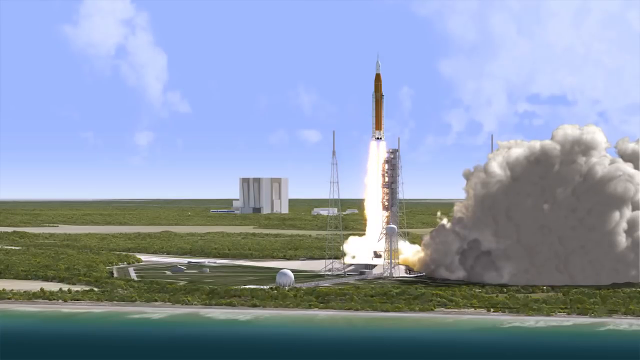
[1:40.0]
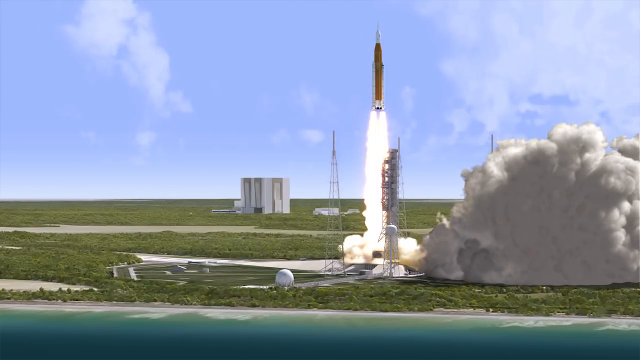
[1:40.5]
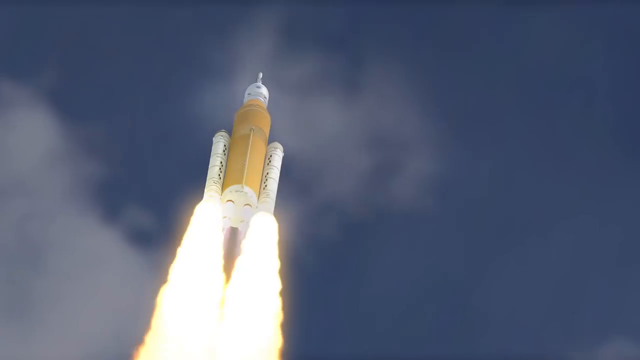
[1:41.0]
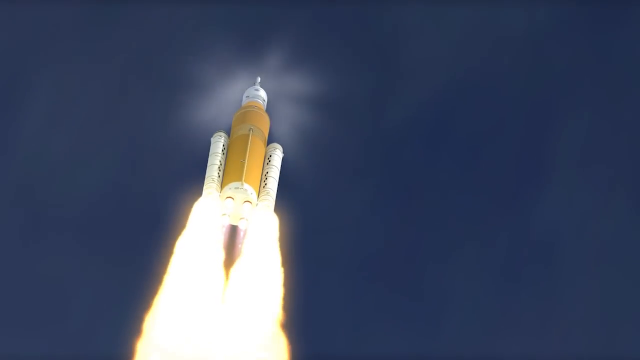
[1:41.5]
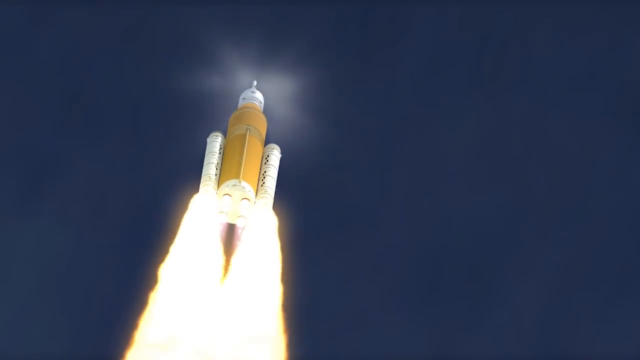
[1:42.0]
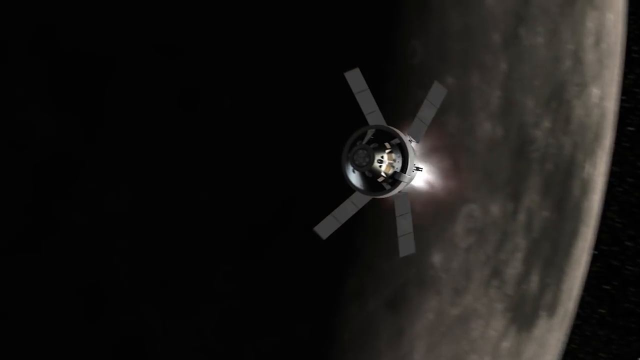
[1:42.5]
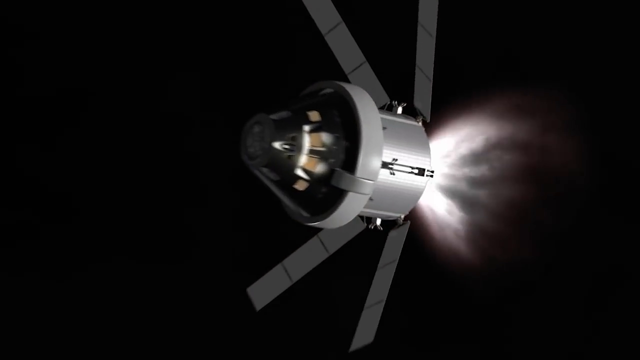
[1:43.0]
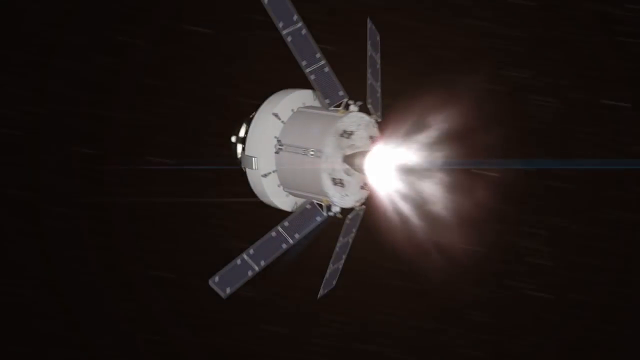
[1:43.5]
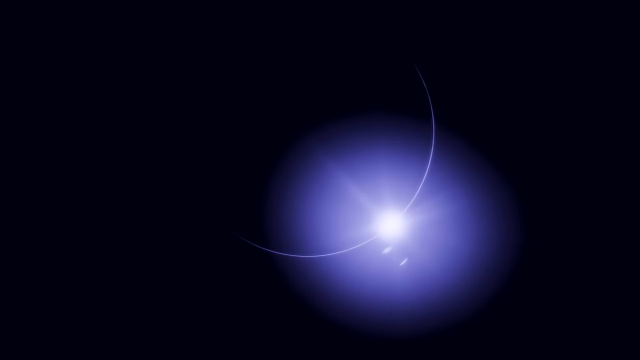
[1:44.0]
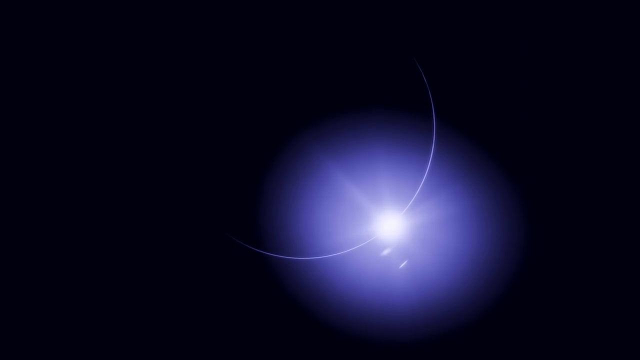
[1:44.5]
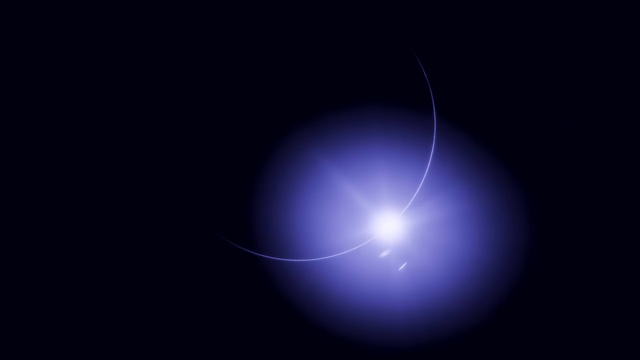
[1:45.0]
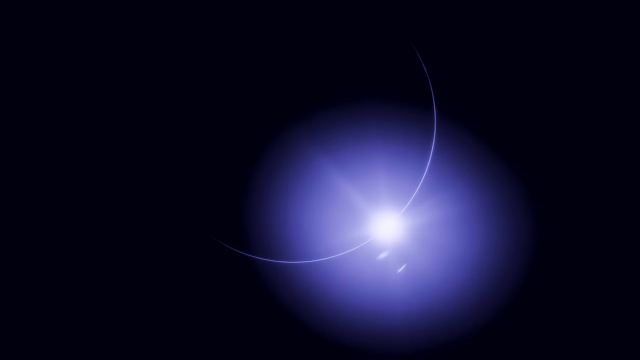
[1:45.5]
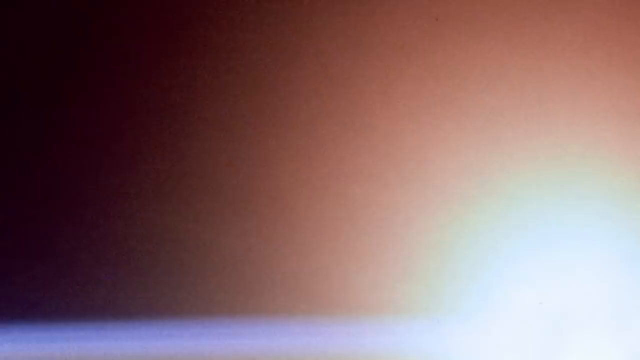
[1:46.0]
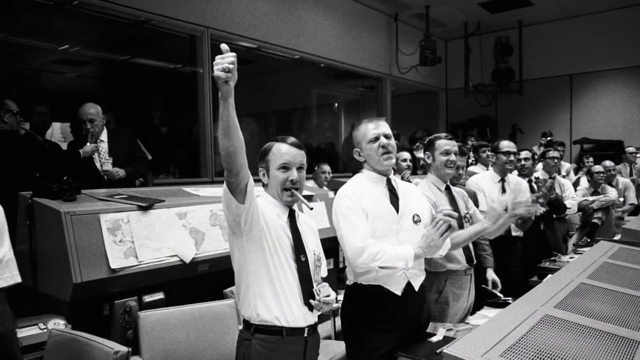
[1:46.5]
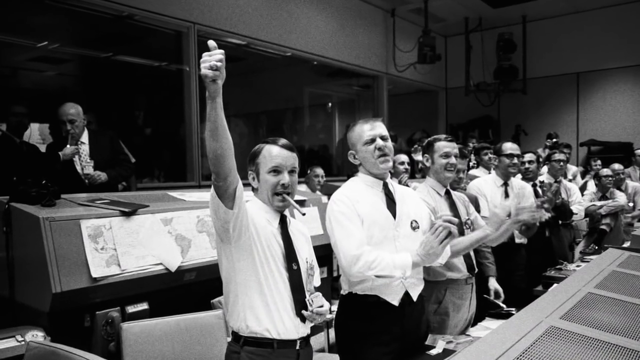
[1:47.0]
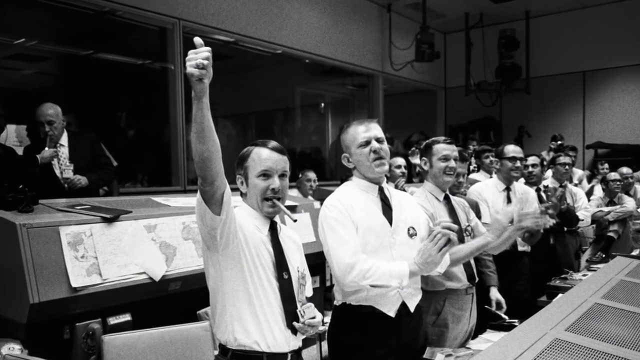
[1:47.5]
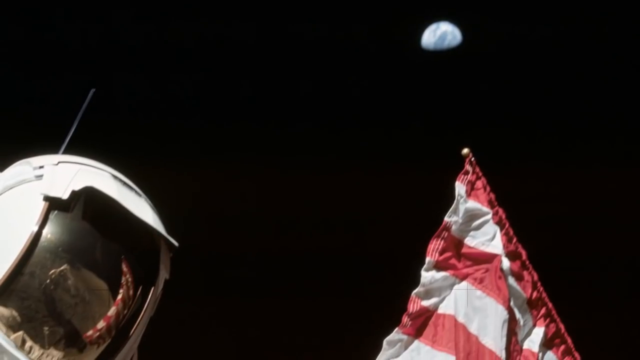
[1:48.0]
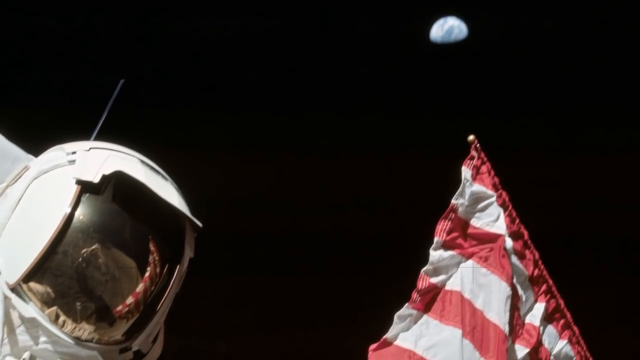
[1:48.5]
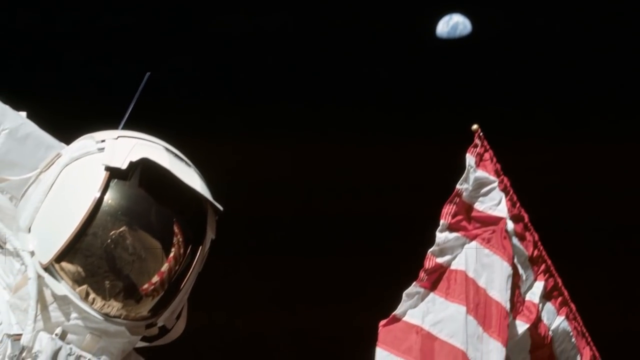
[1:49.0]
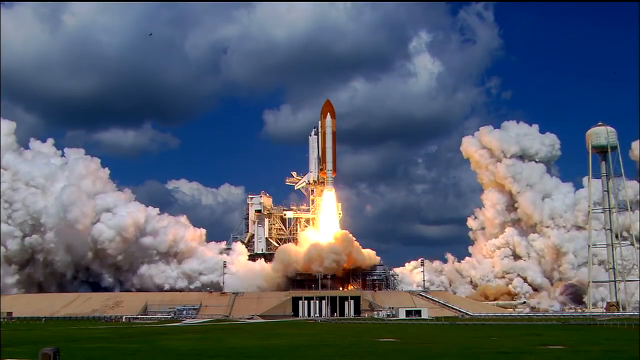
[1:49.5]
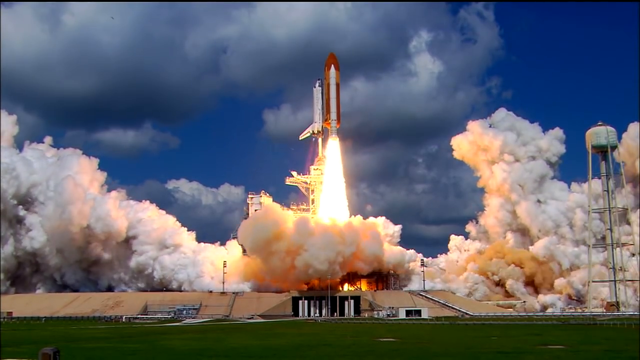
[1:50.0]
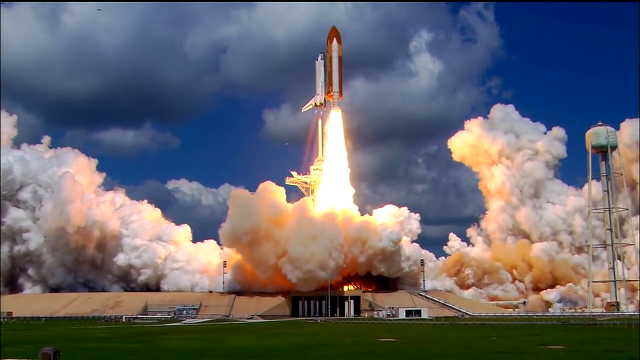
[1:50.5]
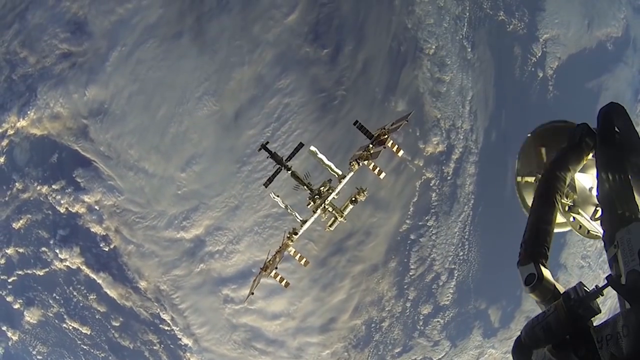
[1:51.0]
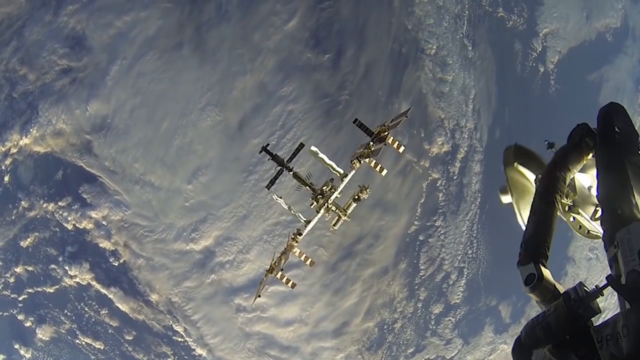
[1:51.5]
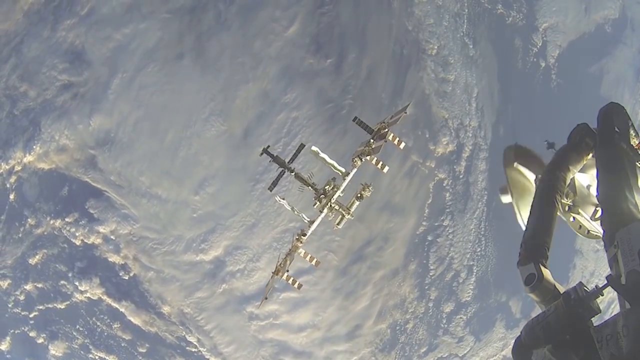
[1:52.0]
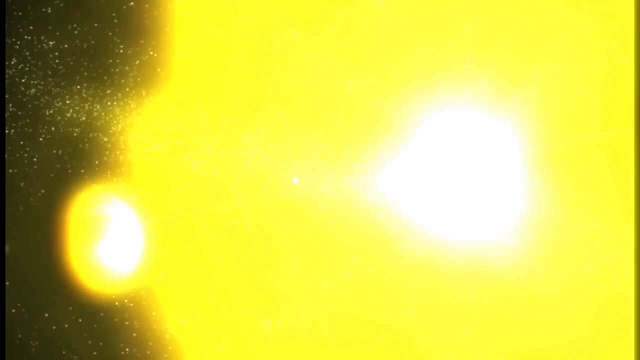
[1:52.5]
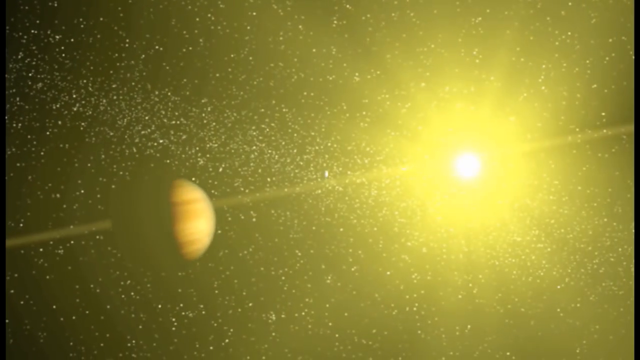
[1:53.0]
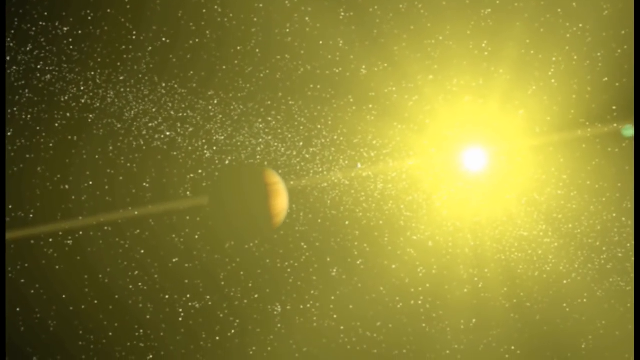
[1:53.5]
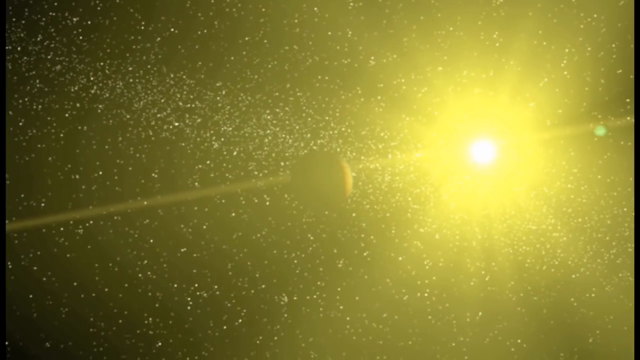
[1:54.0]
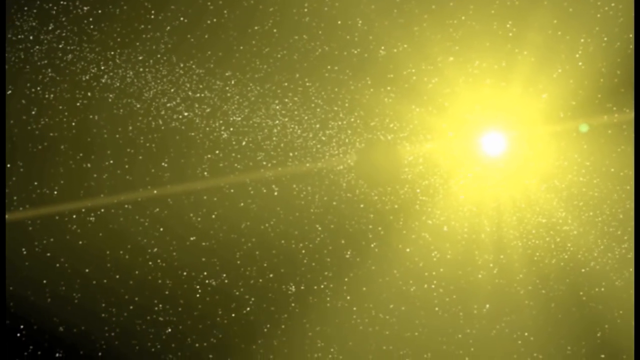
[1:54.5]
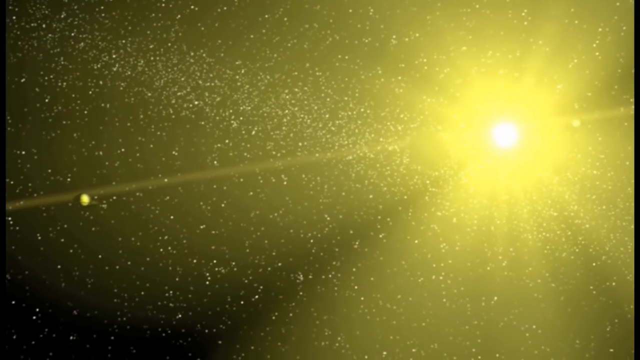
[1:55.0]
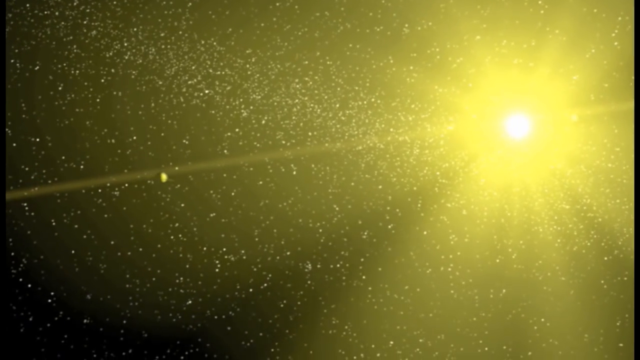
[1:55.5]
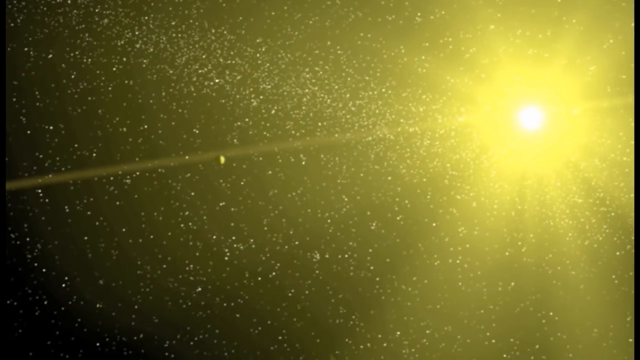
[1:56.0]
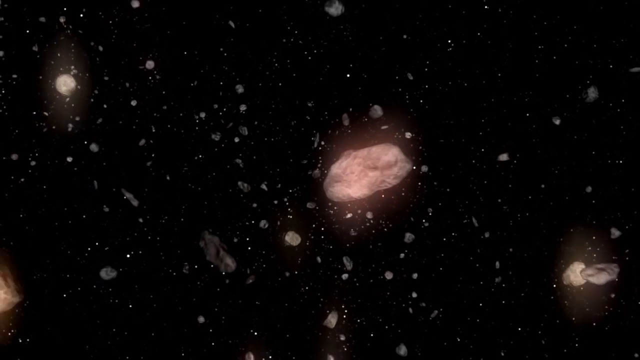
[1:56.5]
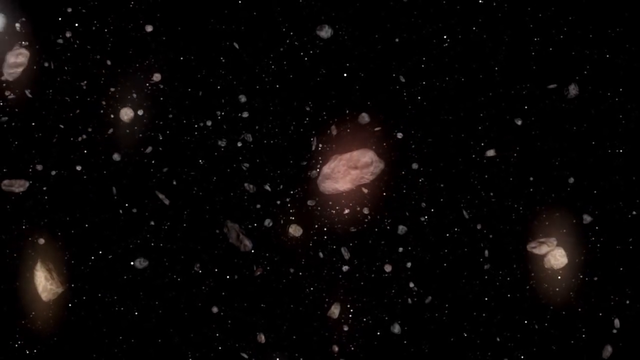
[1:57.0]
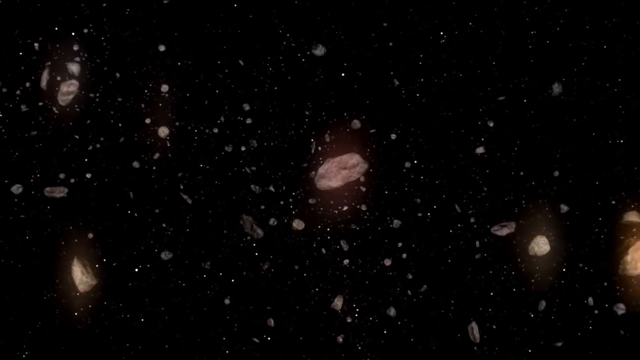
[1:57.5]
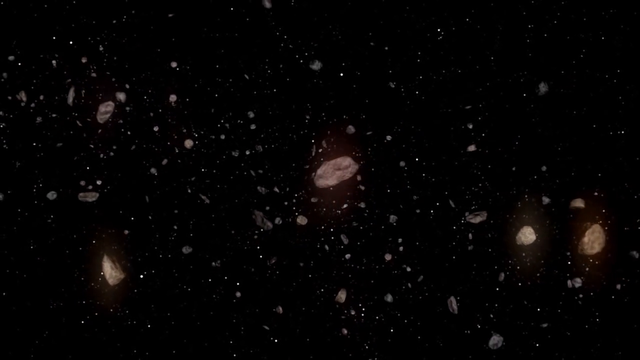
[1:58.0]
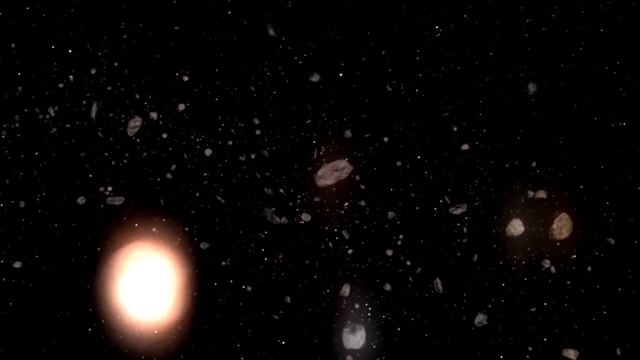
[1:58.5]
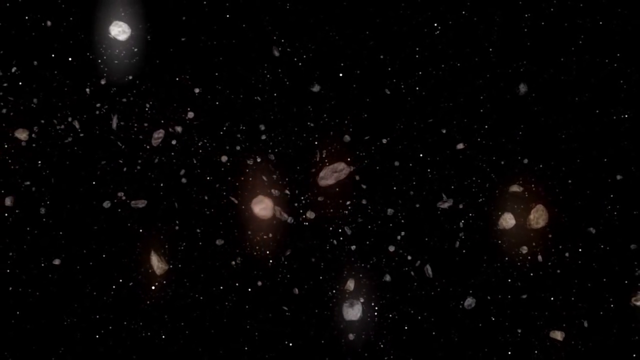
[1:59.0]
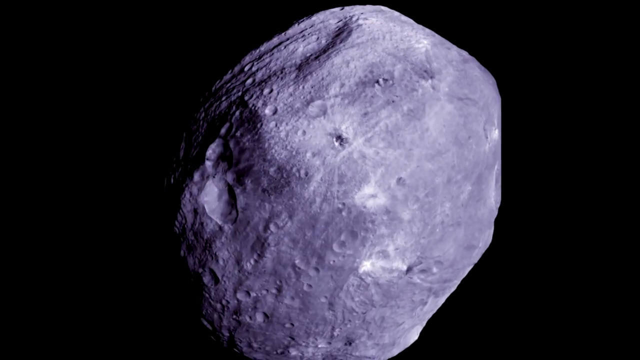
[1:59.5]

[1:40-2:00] In daytime, sunlight and a blue sky with a few clouds are visible, with mostly clear skies. A rocket blasts off with smoke and fire and goes straight up. Possibly a single light is then shown. The screen goes back to a background where a white circle in the middle expands and turns blue. Next is an image of Peter Chambliss in the 70s, apparently indoors. Then an astronaut in white, with a helmet on so the face cannot be seen, holds the American flag, probably after landing on the moon. A satellite is shown over the Earth with a really bright yellow light.